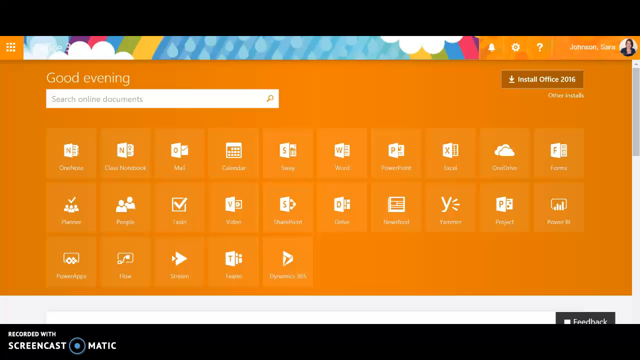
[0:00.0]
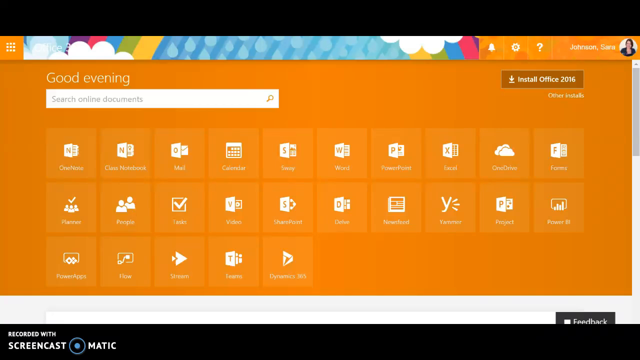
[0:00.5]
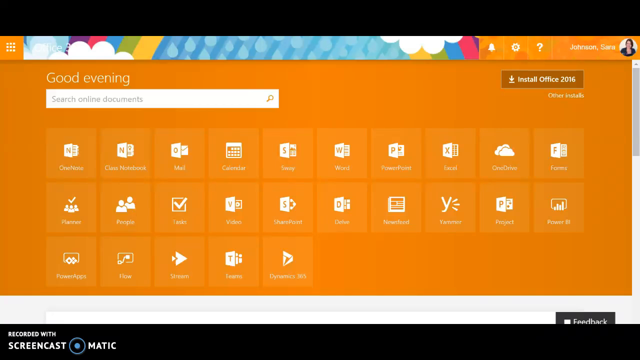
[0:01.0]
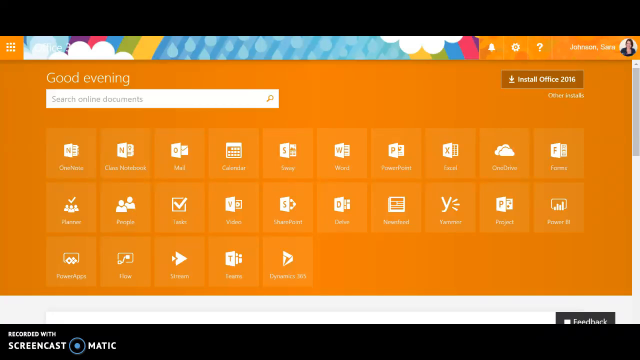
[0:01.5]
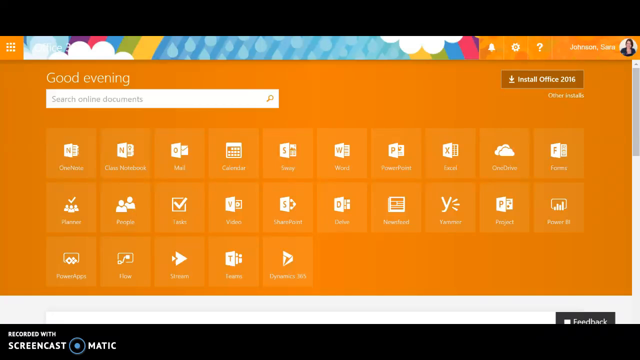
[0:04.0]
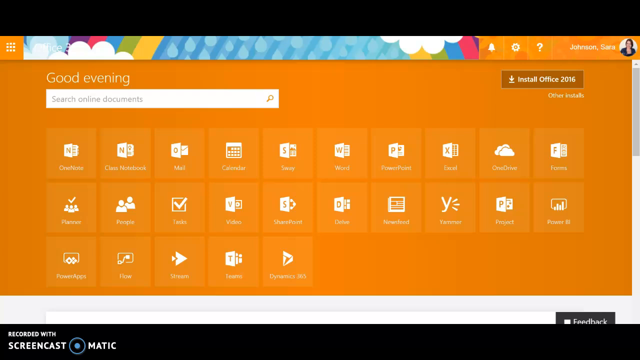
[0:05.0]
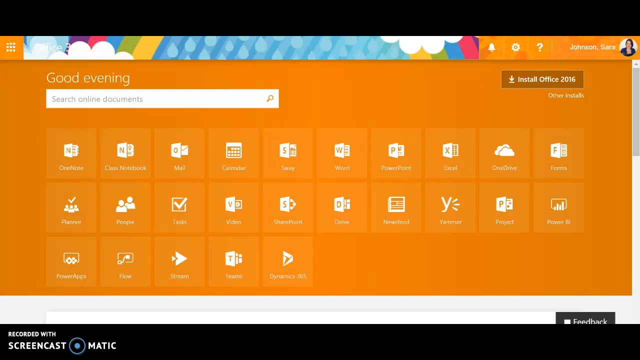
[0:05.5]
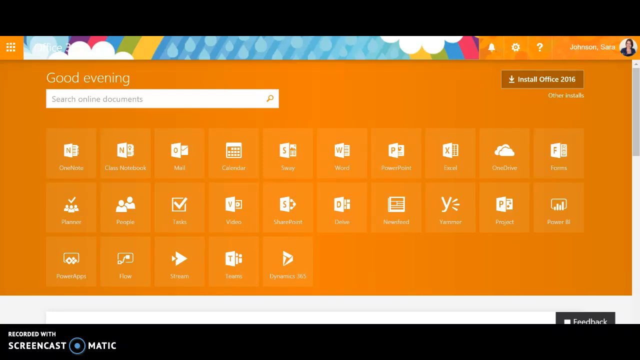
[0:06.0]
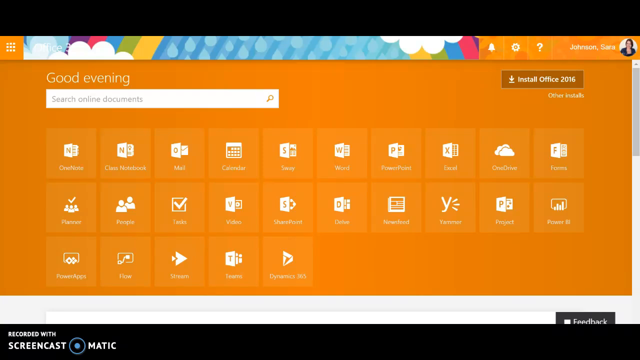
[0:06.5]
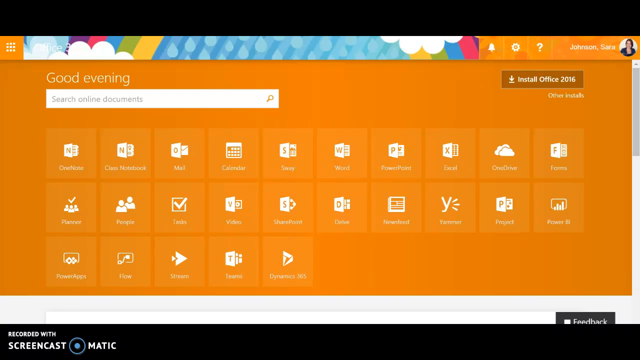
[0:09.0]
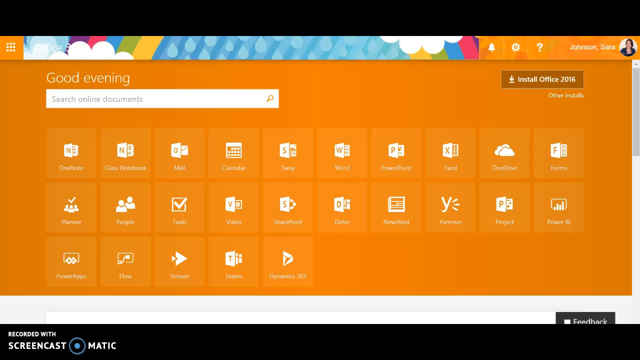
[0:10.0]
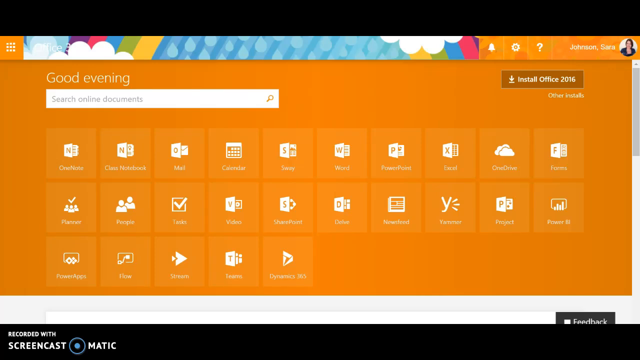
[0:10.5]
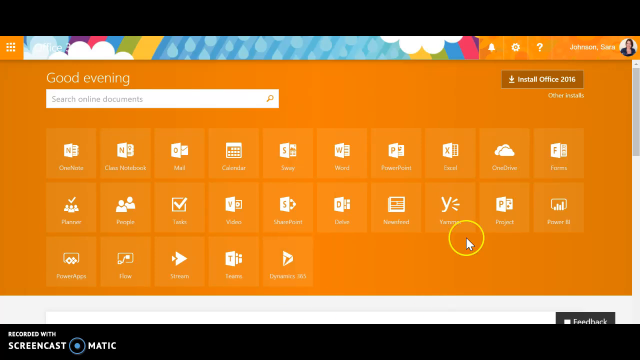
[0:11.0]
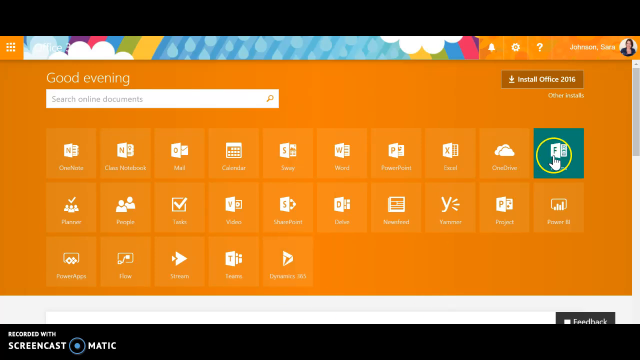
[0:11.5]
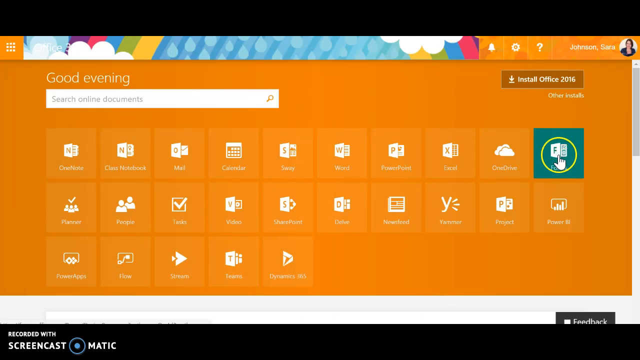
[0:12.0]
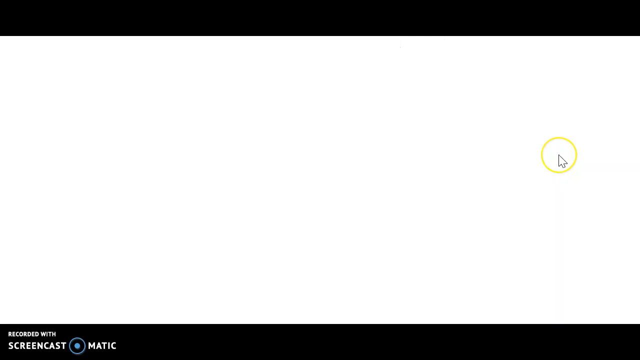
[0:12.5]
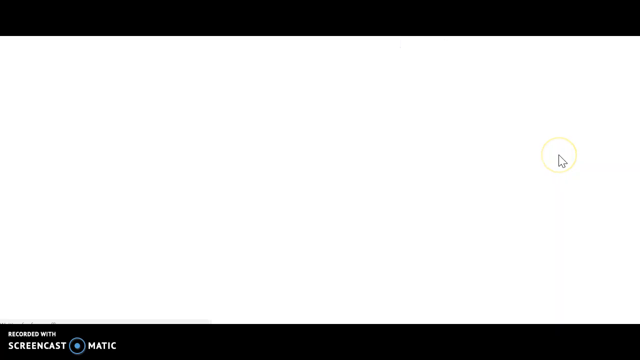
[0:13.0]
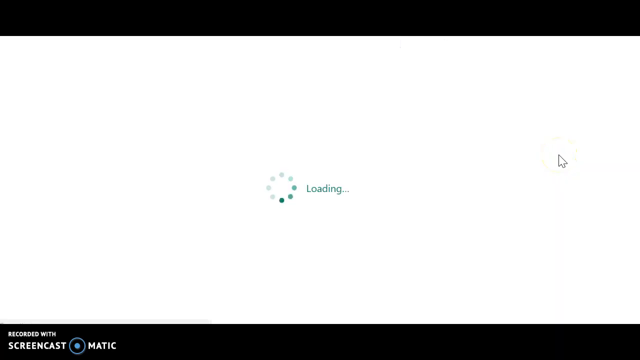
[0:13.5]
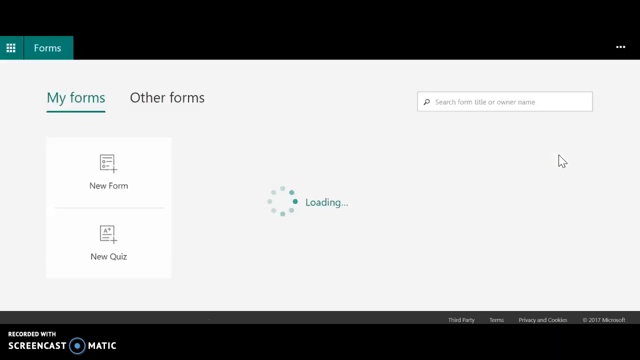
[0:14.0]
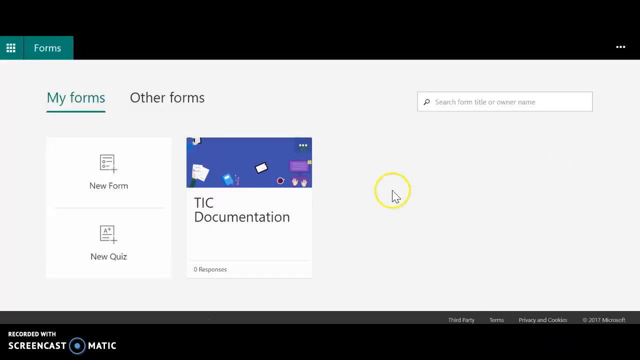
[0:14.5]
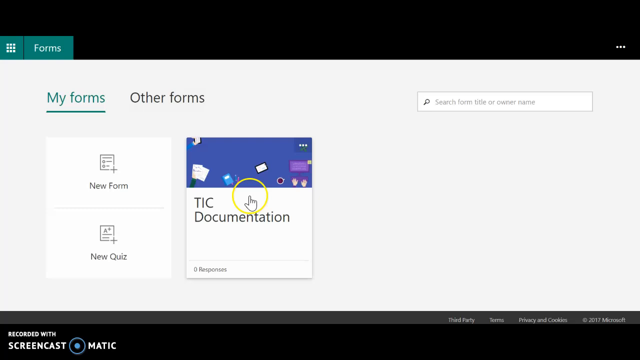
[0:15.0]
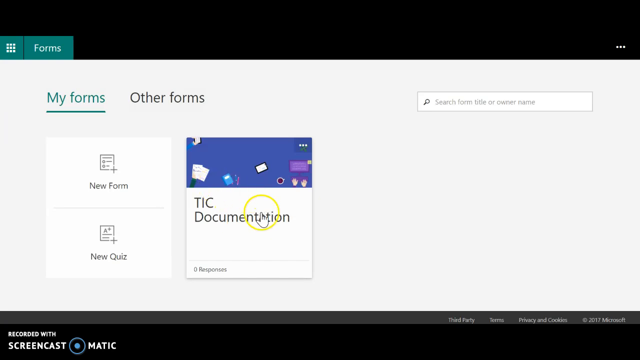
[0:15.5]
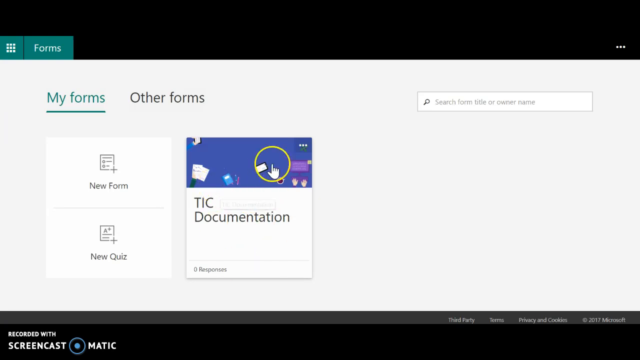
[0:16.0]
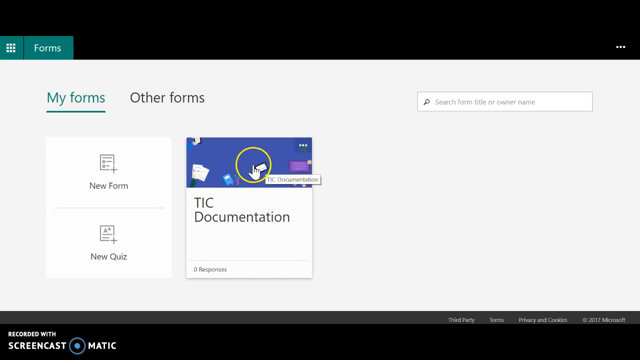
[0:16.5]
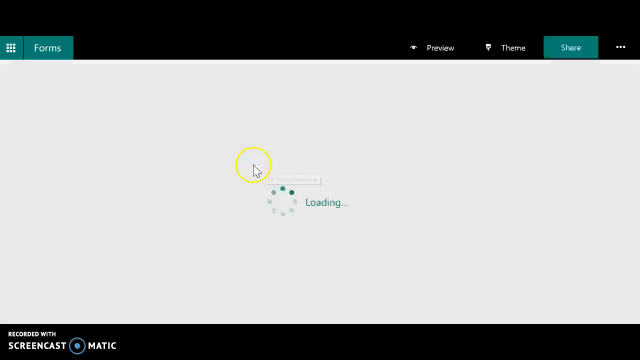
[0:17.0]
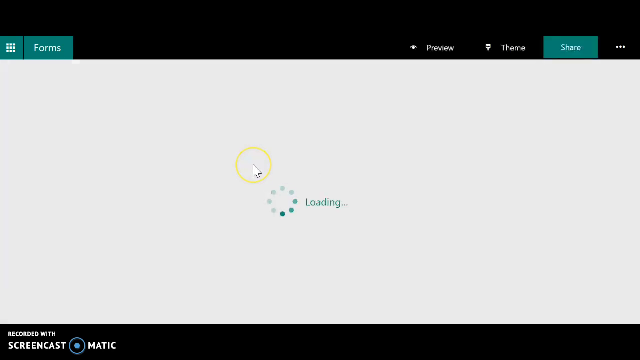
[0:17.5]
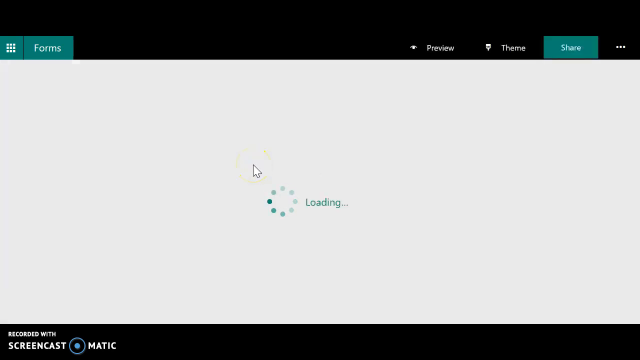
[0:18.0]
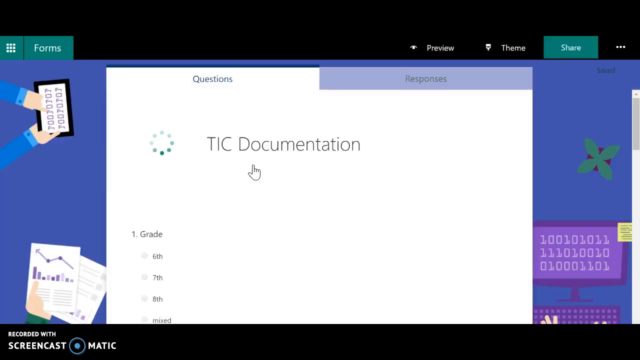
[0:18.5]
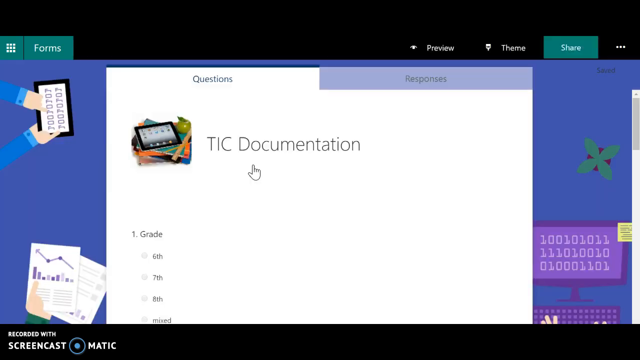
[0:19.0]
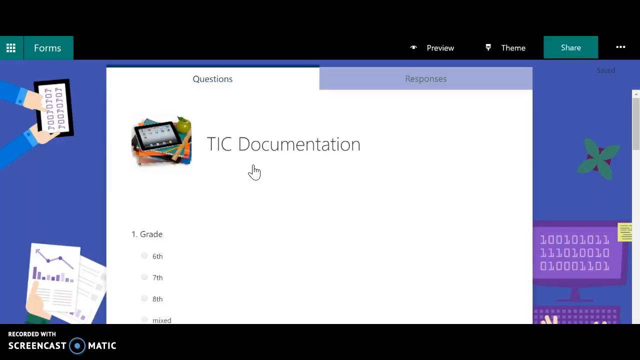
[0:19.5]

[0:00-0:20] A computer screen is shown. On the right it says "Sarah Johnson," and there is a bell, a gear icon and a question mark. A button says "install office 2016," and the screen says "good evening." There is a place to search documents. The screen is in orange and the files are white, with three rows that can be clicked. The user clicks on one to the right, and it goes to "My Forms." They then hit "TIC Documentation," and on top it says "Question or Responses." The view returns to the "good evening" screen, and the cursor moves around. They go to "TIC Documentation" again and click on it; it opens a file that says "TIC Documentation" and then returns to the orange home screen. On the bottom right-hand side it says "Feedback," and there is an Apple logo.